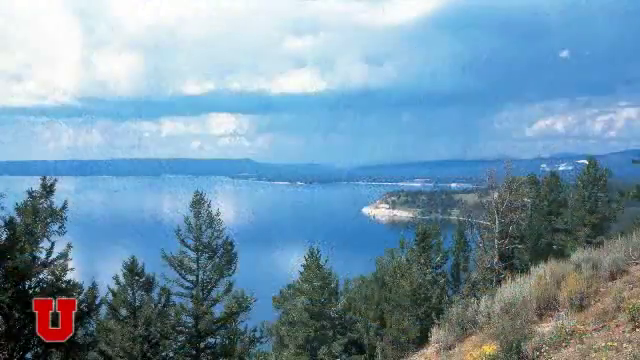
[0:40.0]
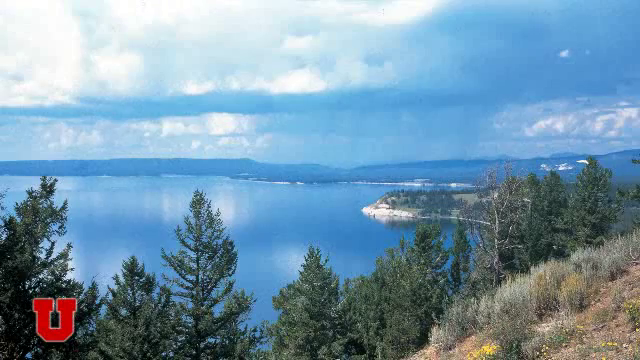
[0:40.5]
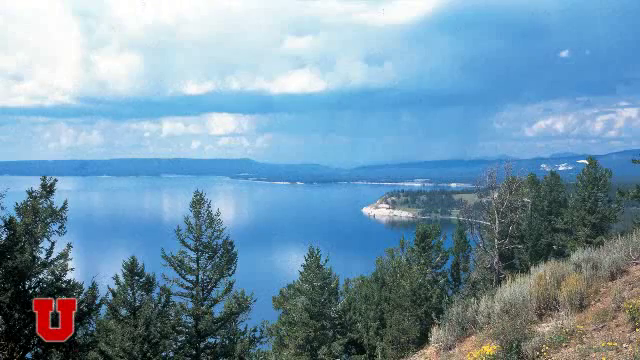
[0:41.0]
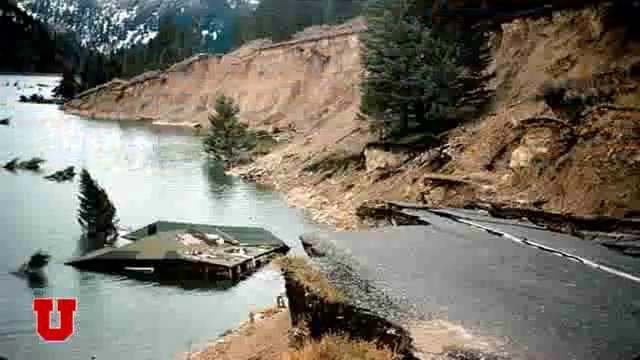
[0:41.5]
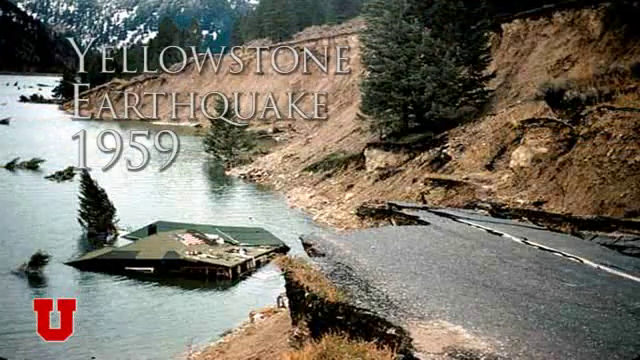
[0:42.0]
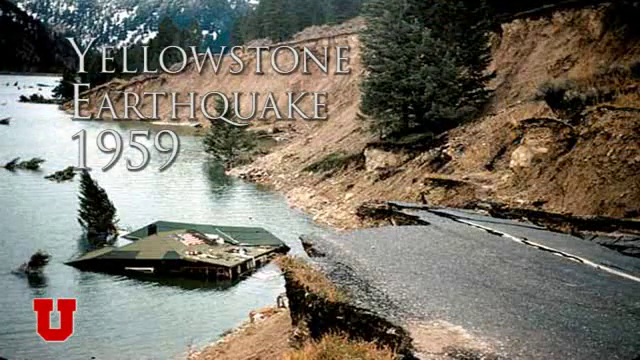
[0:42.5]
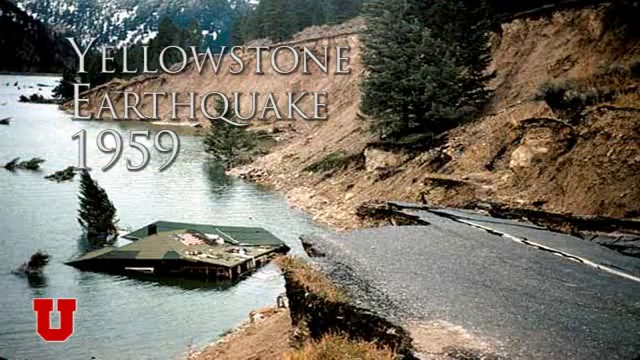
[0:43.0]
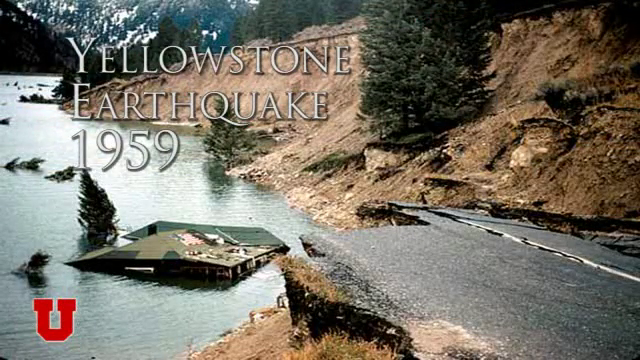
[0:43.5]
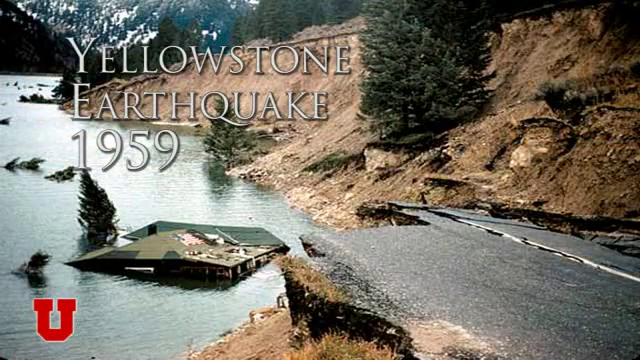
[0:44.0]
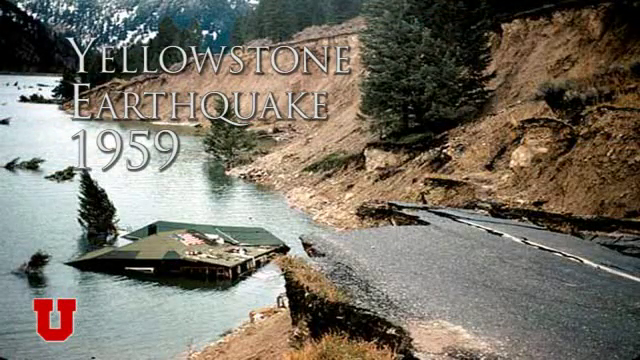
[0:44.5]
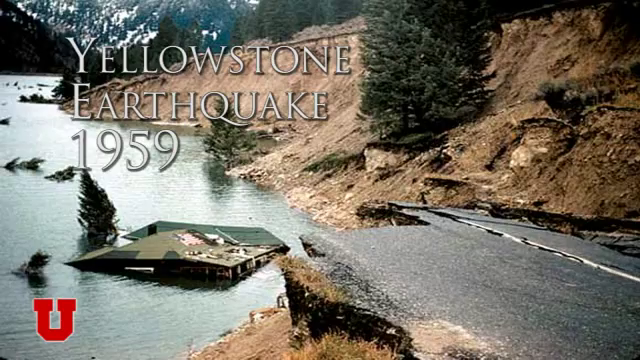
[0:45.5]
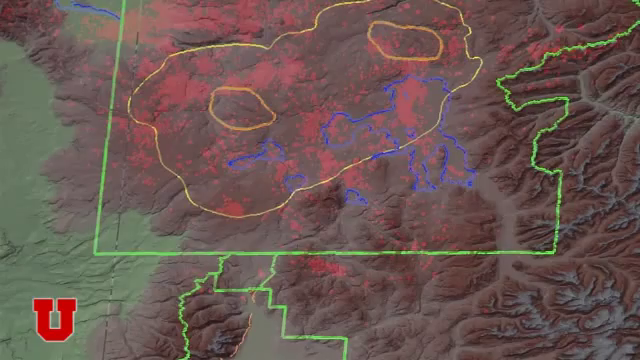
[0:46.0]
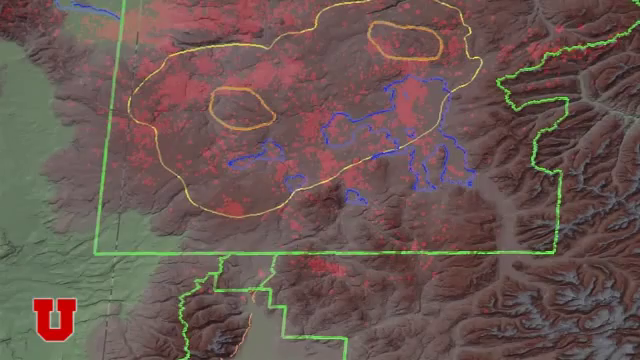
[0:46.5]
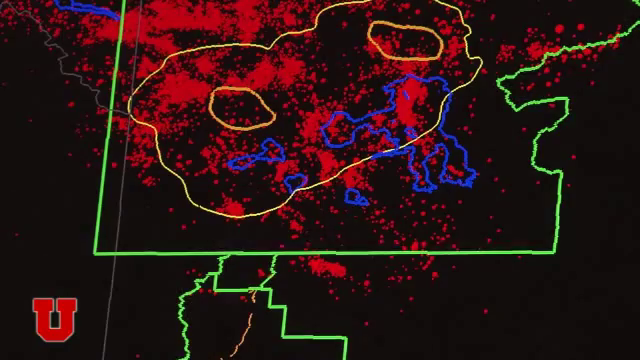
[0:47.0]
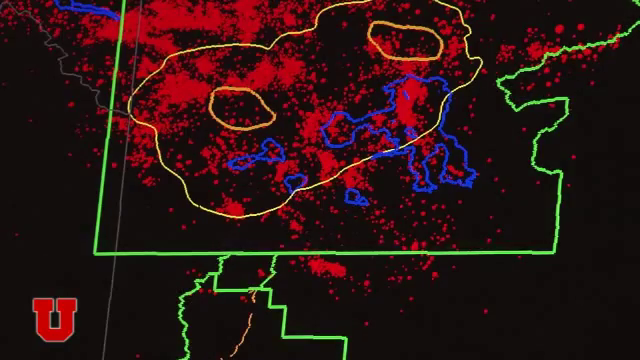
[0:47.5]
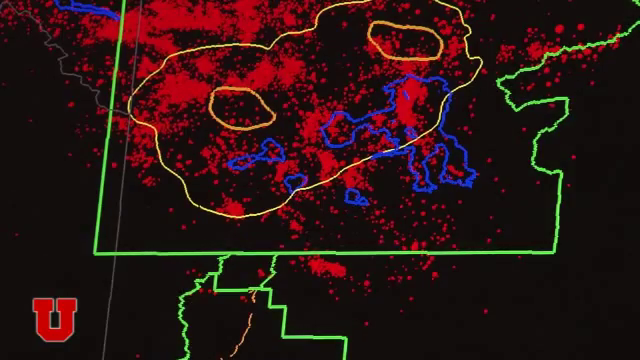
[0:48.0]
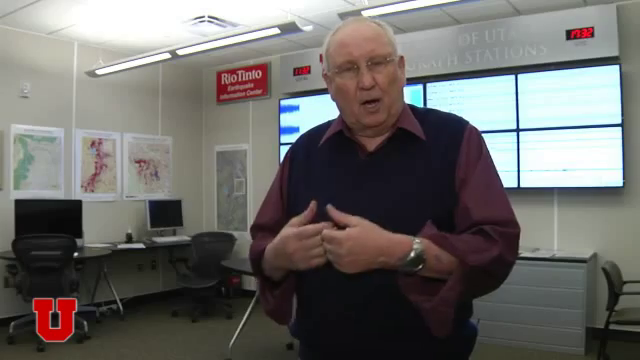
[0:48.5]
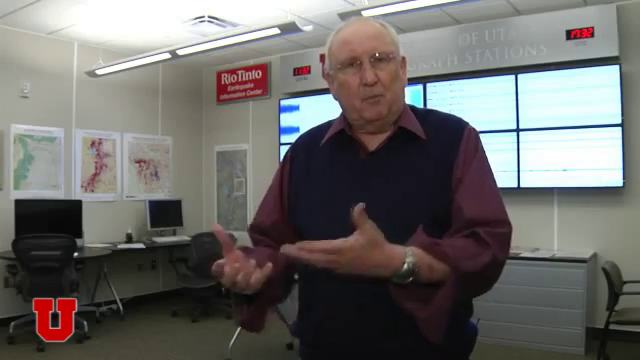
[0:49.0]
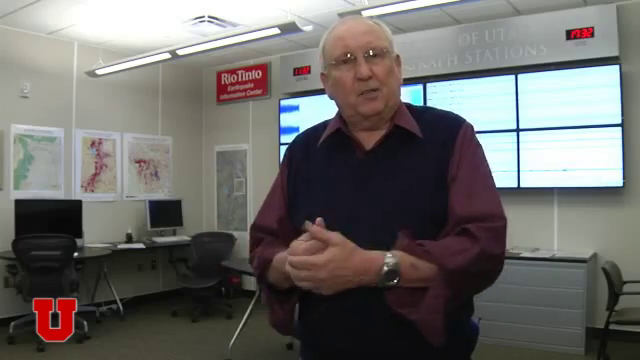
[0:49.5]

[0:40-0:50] An image shows trees surrounding a lake, with pine trees and grasses, a cloudy blue sky with blue-gray clouds, and crystal blue water with white reflections. A scene from Yellowstone National Park follows, with text indicating it is a scene from an earthquake in 1959. Something is in the water, possibly a small piece of land with a tent on it. The video cuts back to Mr. Smith talking very animatedly, and what appear to be topography maps are shown.